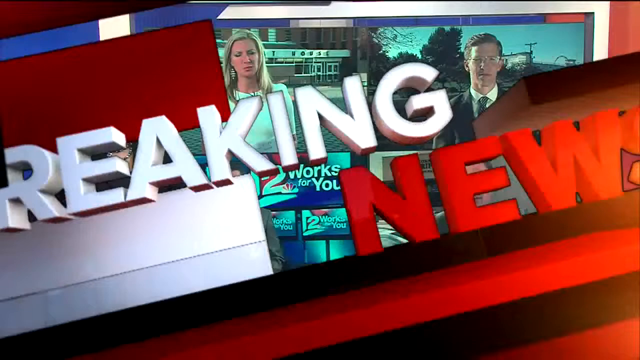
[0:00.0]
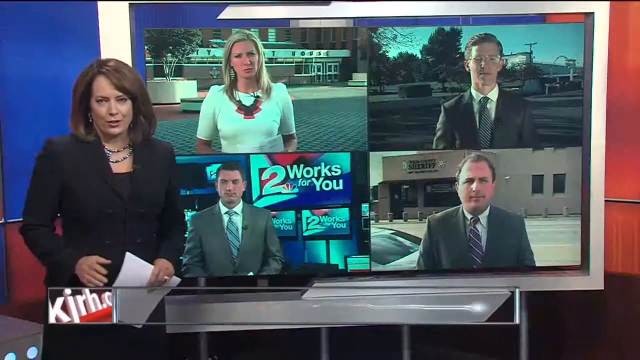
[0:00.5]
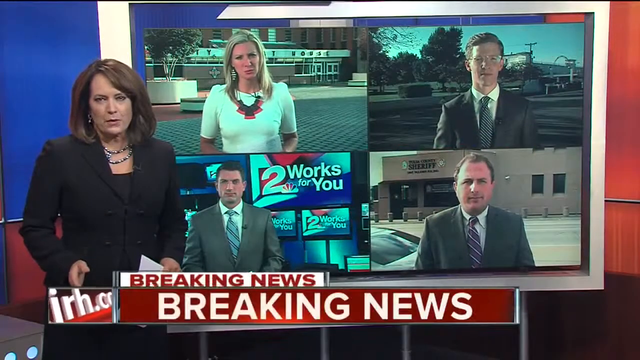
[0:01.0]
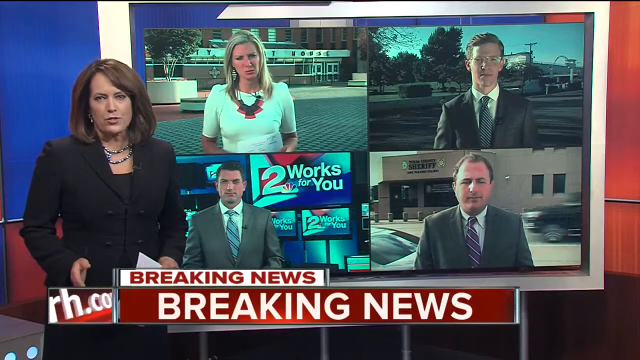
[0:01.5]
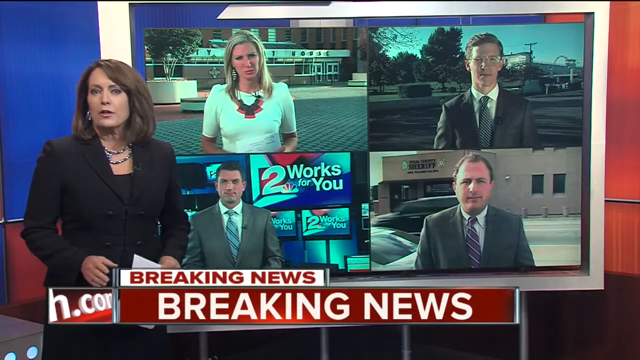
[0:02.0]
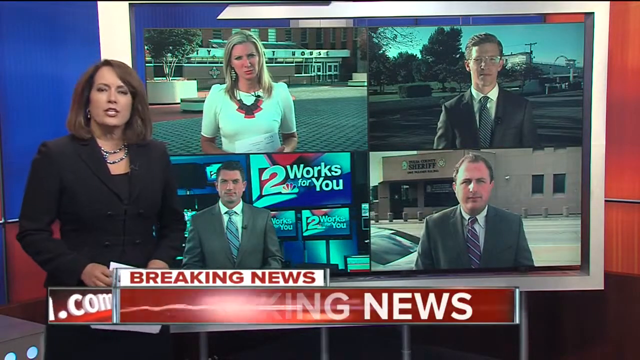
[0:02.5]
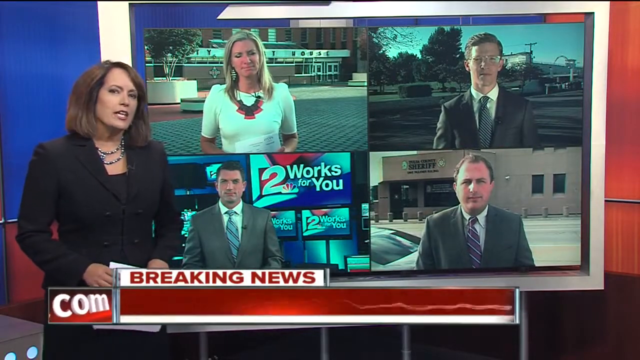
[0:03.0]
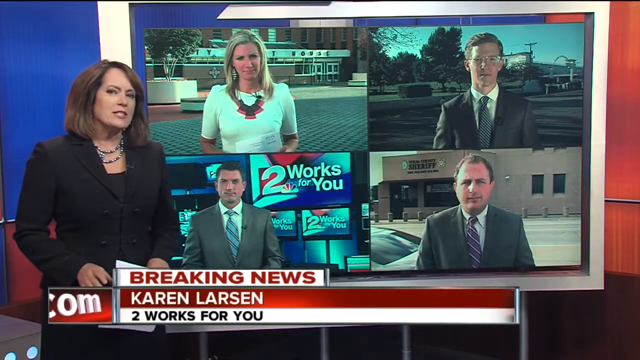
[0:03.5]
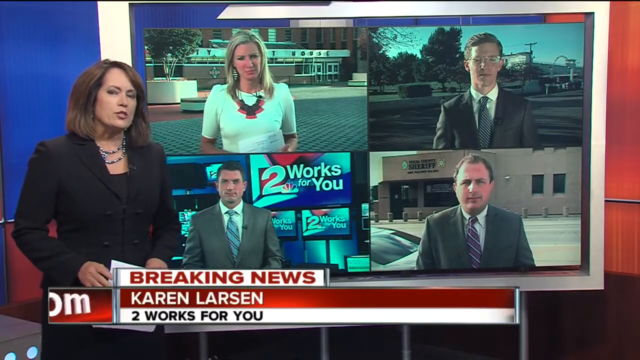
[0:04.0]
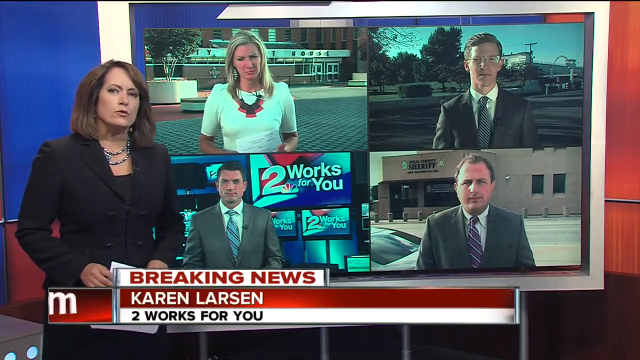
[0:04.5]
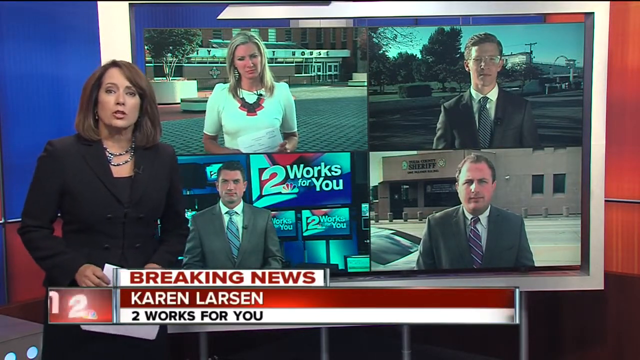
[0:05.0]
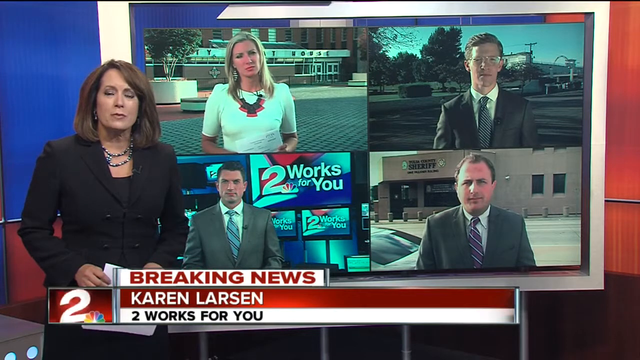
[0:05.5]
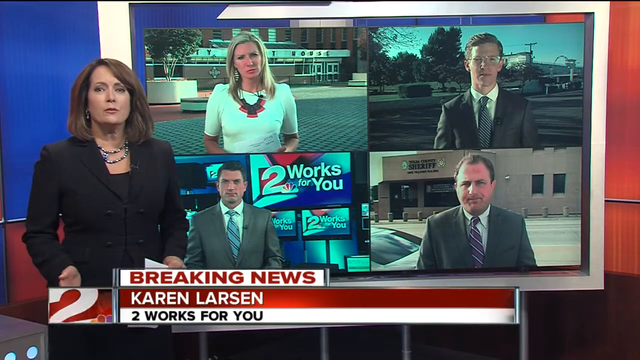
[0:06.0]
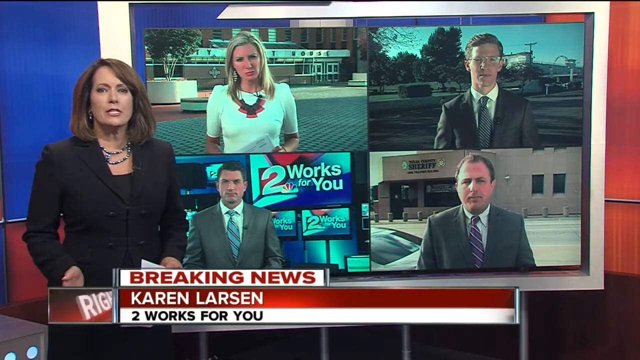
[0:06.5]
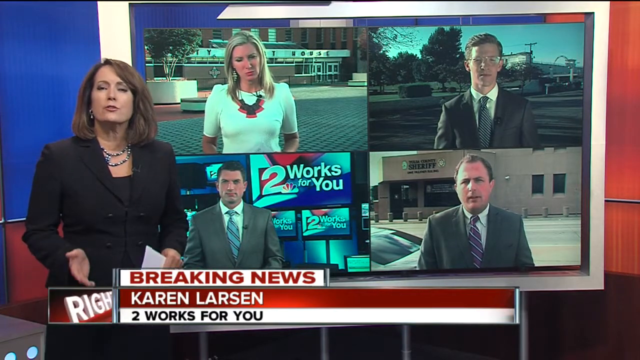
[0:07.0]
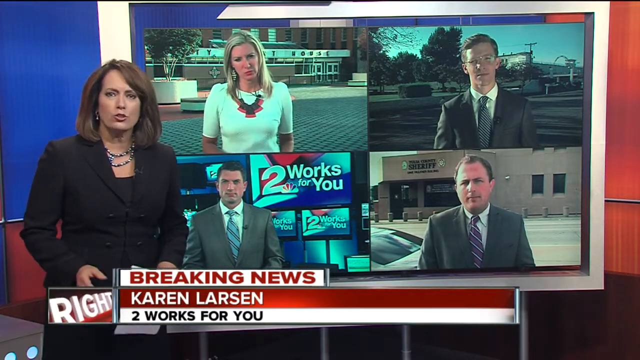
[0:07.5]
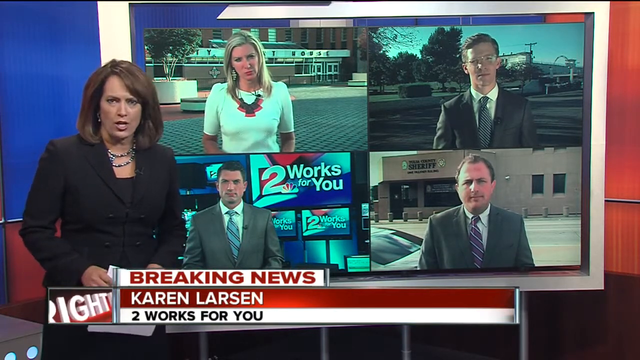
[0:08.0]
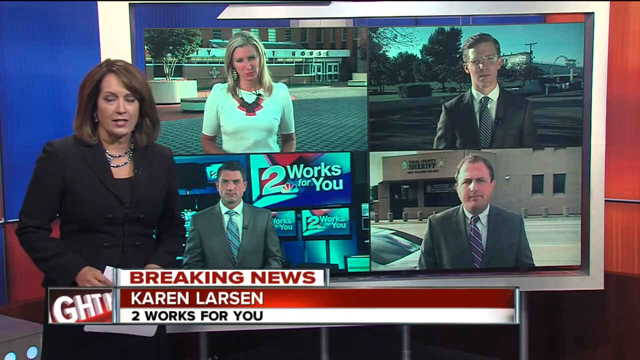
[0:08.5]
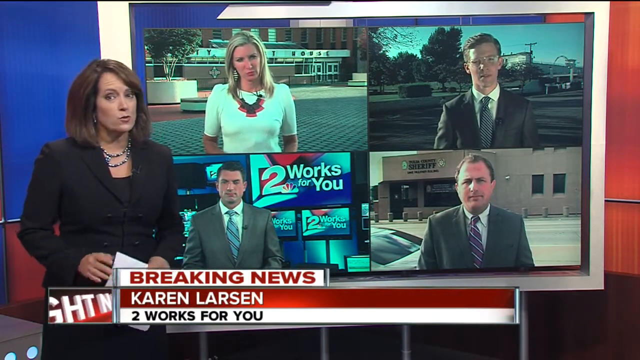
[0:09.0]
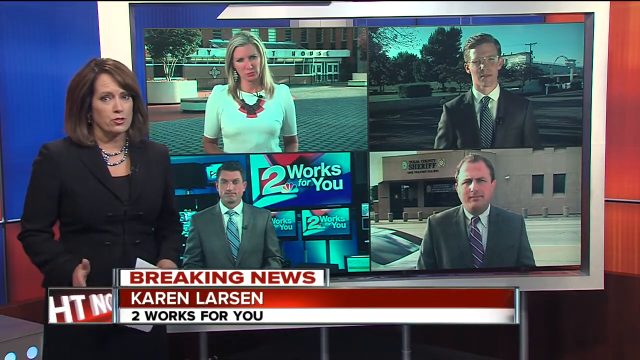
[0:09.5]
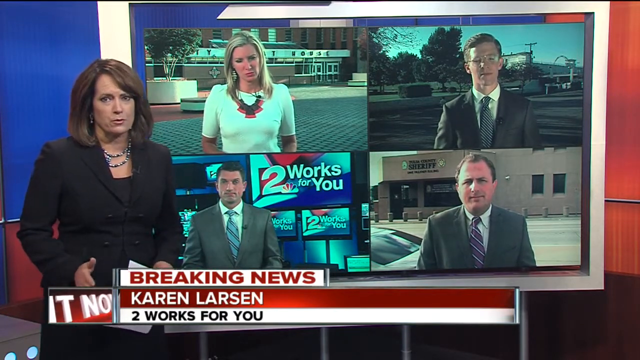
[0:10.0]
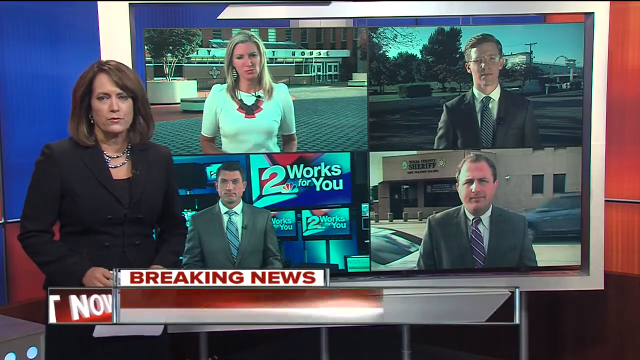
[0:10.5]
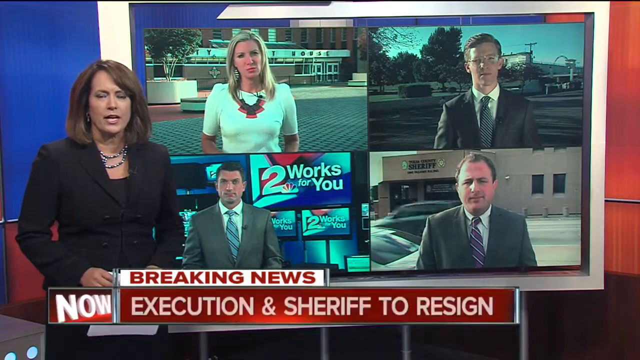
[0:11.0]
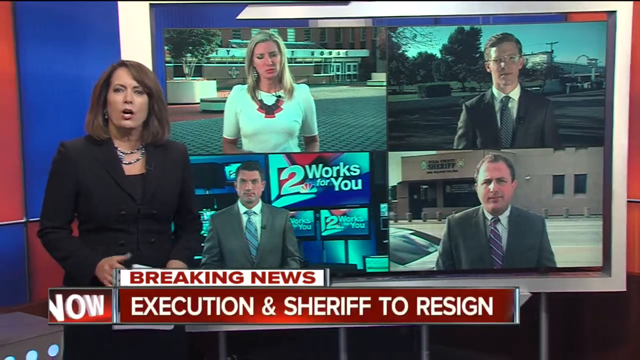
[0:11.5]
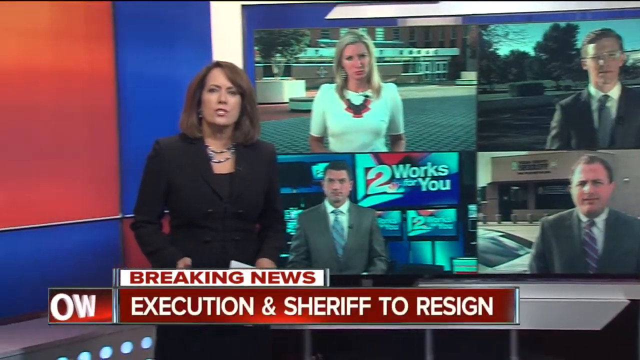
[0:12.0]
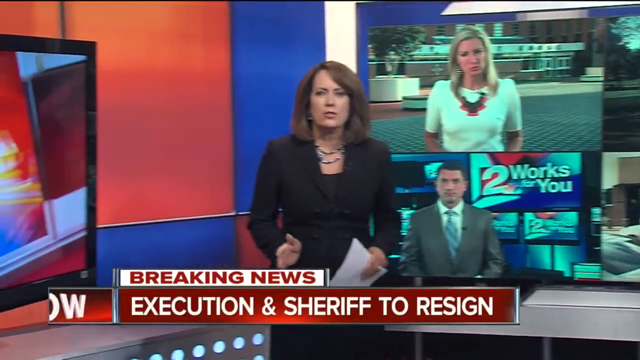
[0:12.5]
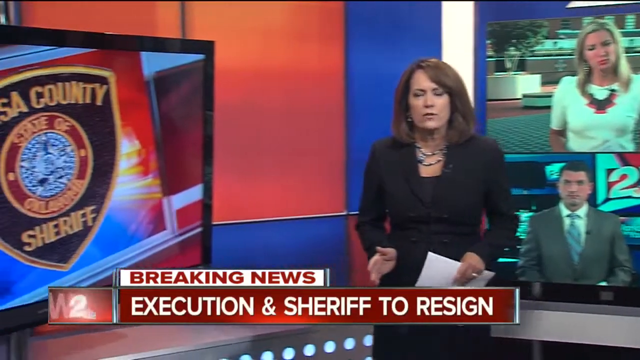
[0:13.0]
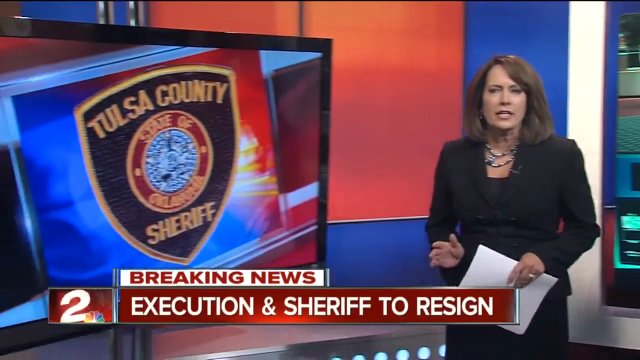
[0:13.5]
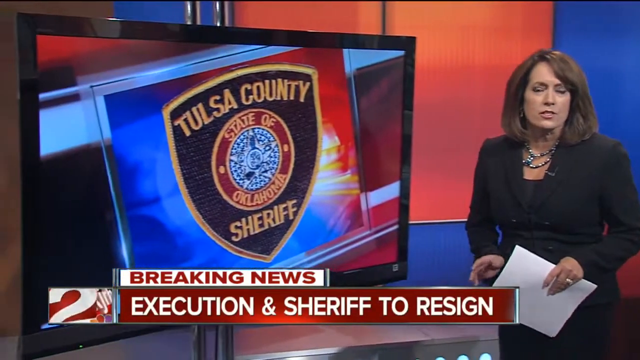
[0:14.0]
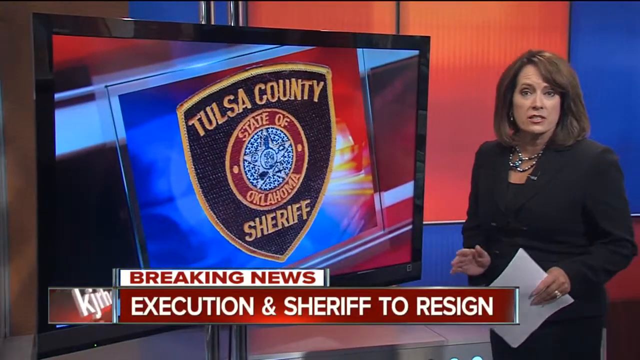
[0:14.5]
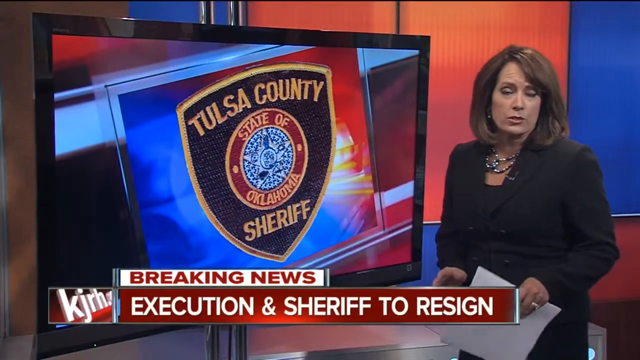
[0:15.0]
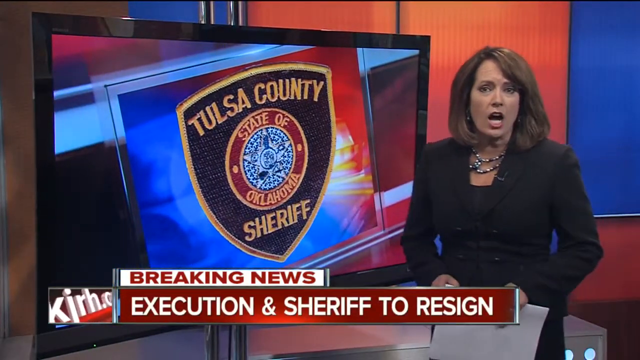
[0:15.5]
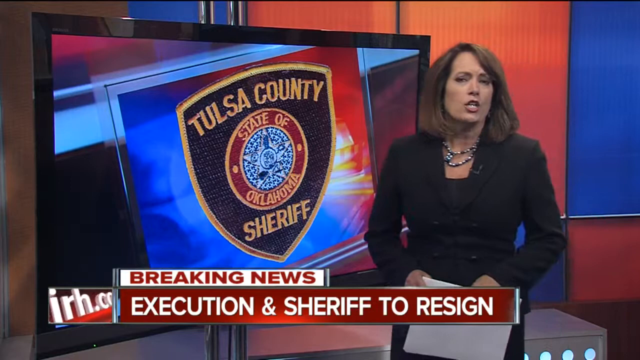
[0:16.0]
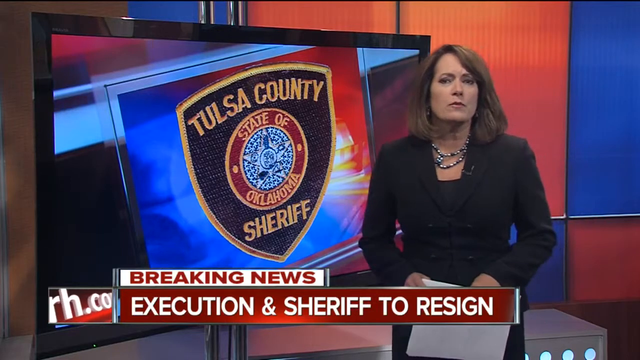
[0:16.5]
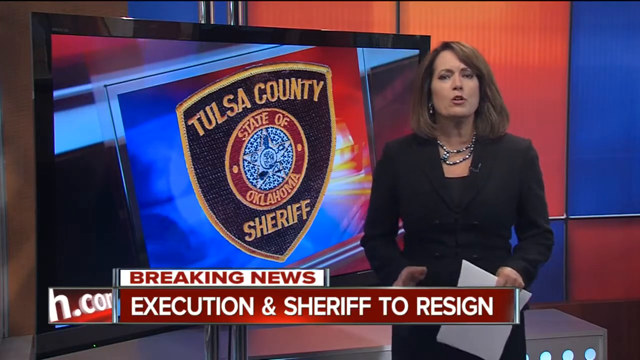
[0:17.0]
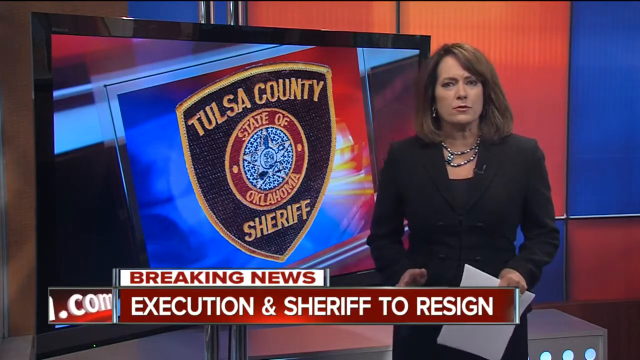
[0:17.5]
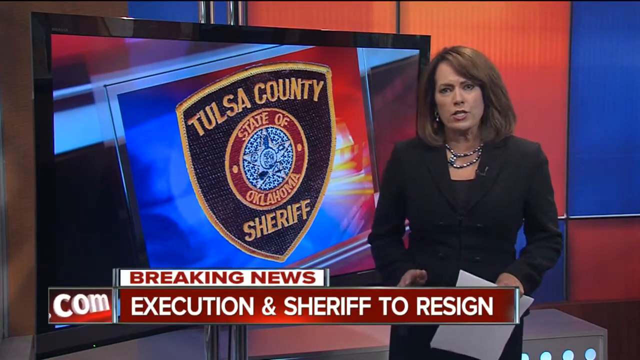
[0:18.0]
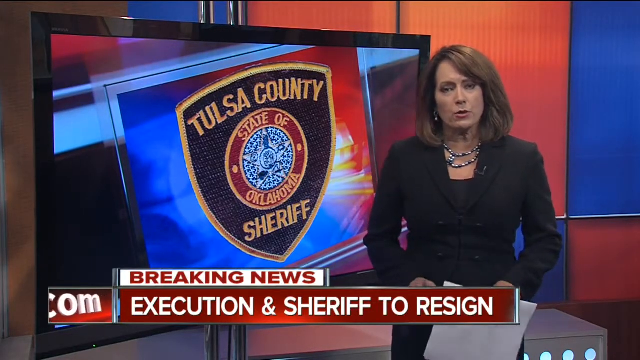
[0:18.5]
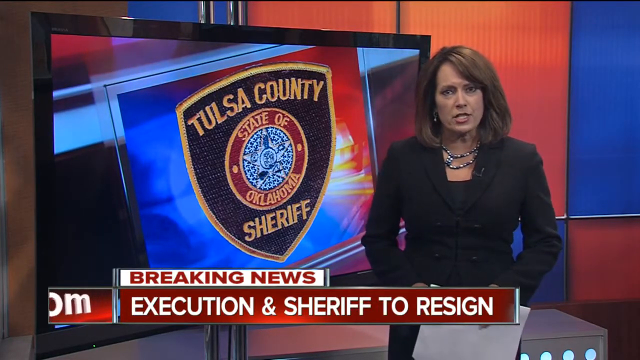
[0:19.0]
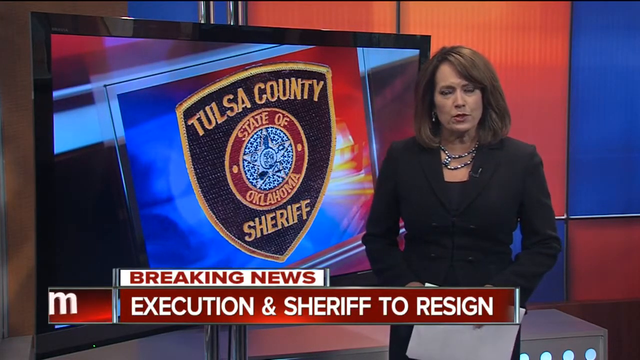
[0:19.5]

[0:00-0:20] The video opens with a news graphic indicating breaking news, with "breaking" written in white and "news" written in red. It then transitions to breaking news shown at the bottom of the screen, on Channel 2 NBC "works for you." A female news anchor, Karen Larson, stands in the studio. She has shoulder-length brown hair and wears a black suit jacket over a black shirt, with four buttons visible on the jacket. Behind her, a large screen shows four images: in the upper left, a female in her late 30s wearing a short-sleeved white shirt; in the upper right, a male in his late 20s wearing a suit, blue tie, white shirt and glasses; in the bottom left, a male in his late 20s wearing a gray suit with a blue tie; and in the bottom right, a middle-aged white male in a dark suit jacket and a purple and white striped tie, with a sheriff's office behind him. Karen looks at the screen, speaking and gesturing with her hands, palms up. Text at the bottom says "execution and sheriff to resign." The camera pans to the left past Karen to show a screen with a badge that says "Tulsa County Sheriff, State of Oklahoma," and pans to the right past Karen to show a screen with the same badge.